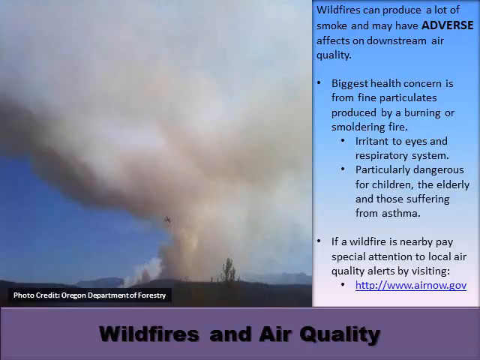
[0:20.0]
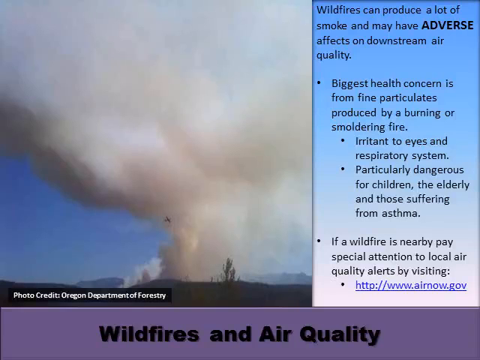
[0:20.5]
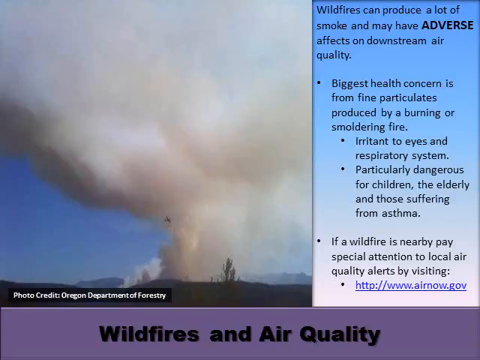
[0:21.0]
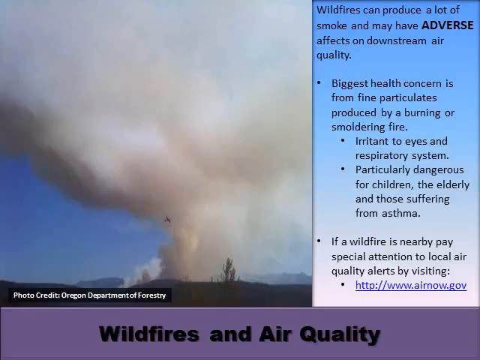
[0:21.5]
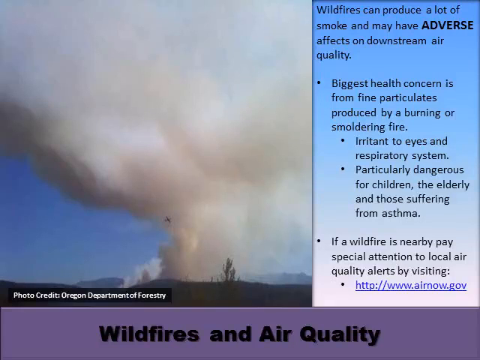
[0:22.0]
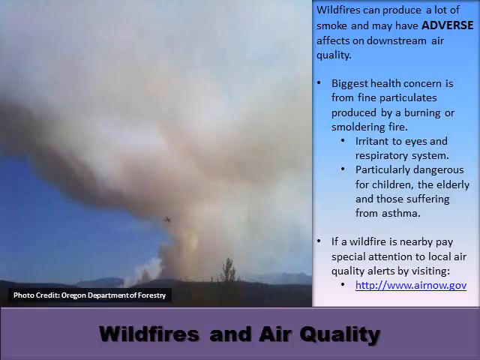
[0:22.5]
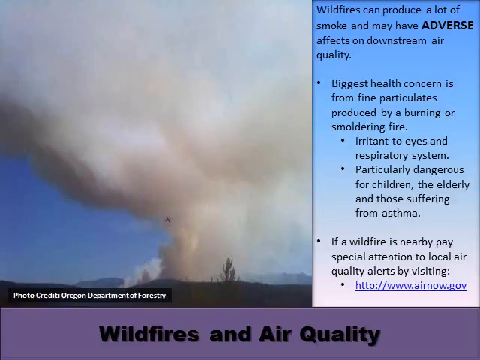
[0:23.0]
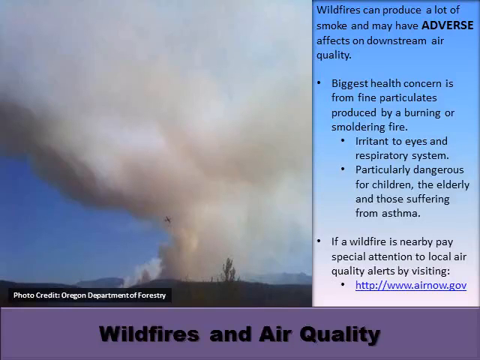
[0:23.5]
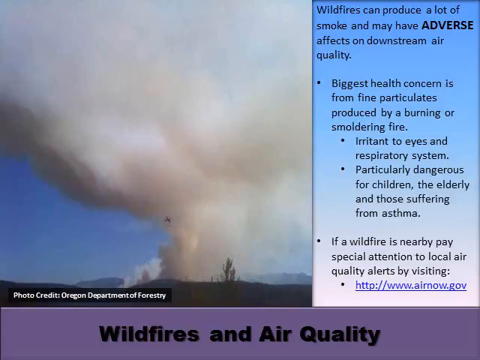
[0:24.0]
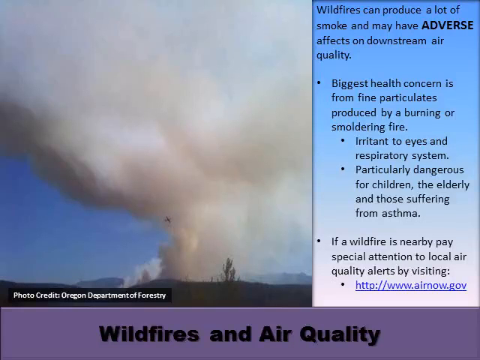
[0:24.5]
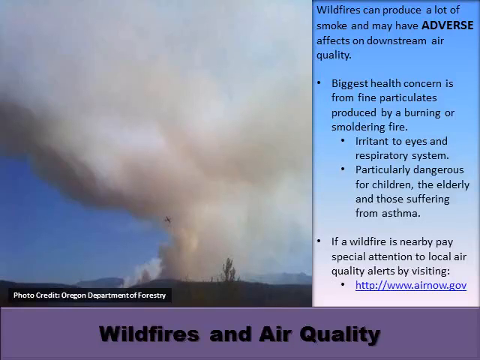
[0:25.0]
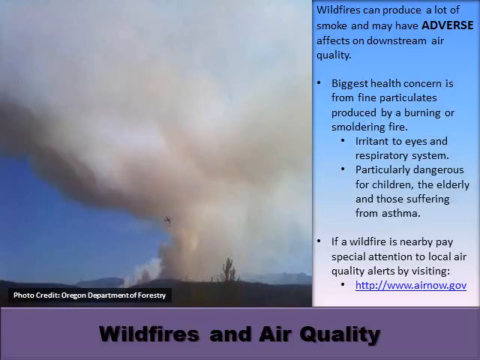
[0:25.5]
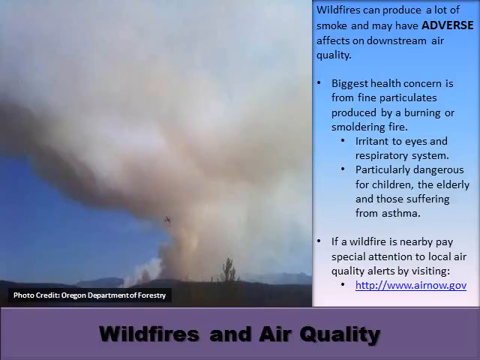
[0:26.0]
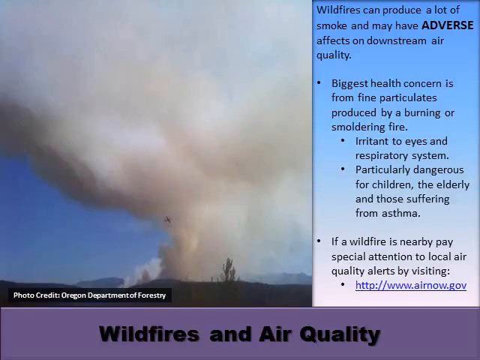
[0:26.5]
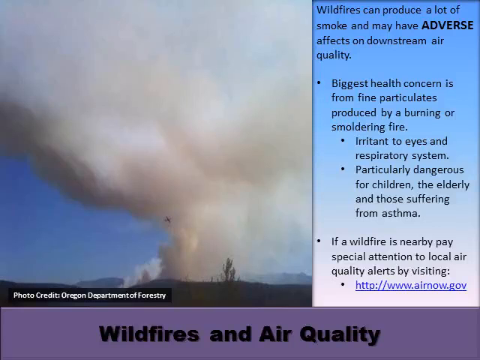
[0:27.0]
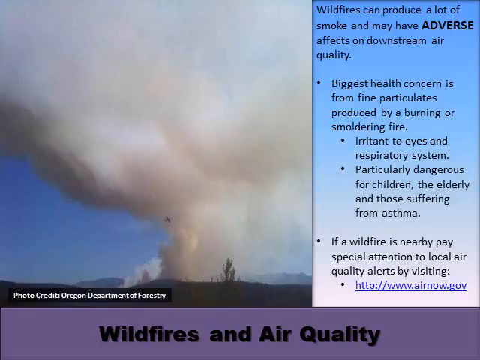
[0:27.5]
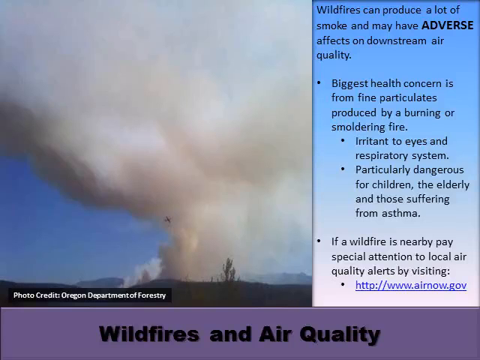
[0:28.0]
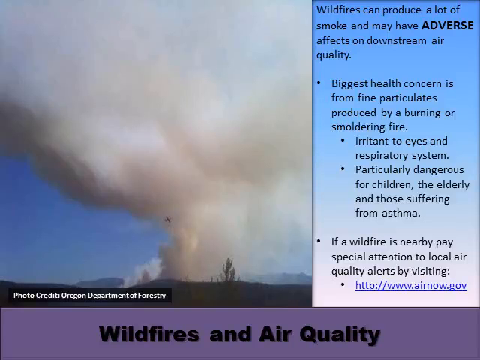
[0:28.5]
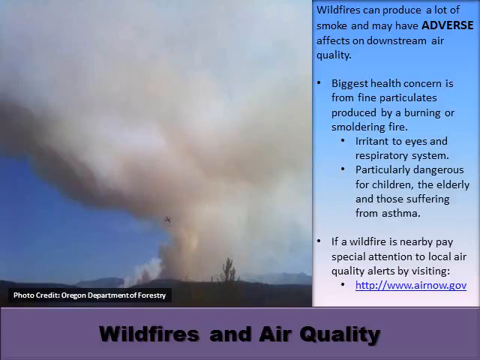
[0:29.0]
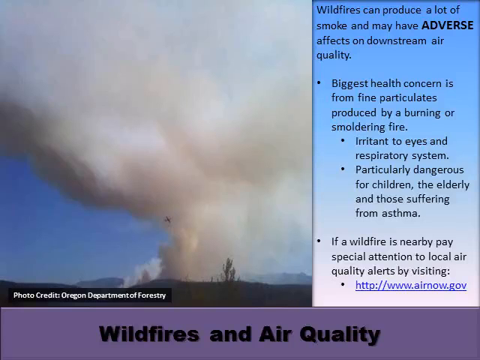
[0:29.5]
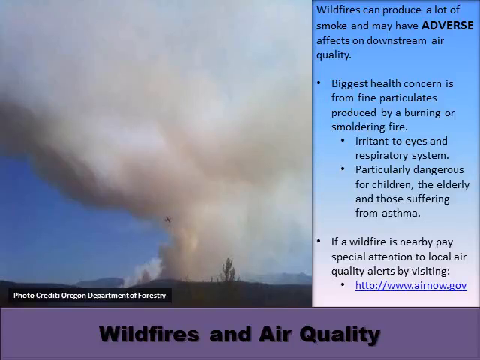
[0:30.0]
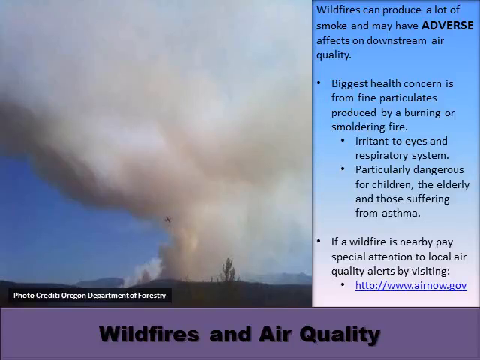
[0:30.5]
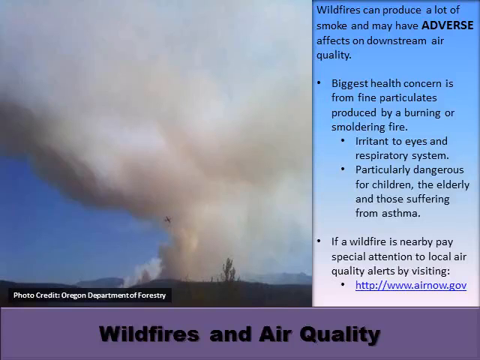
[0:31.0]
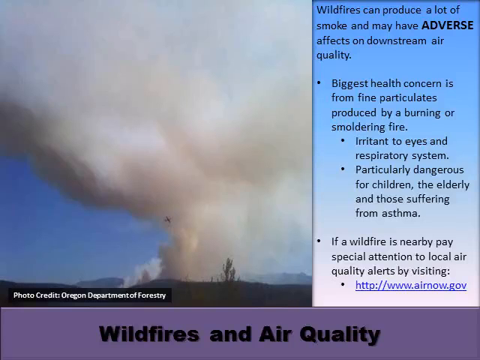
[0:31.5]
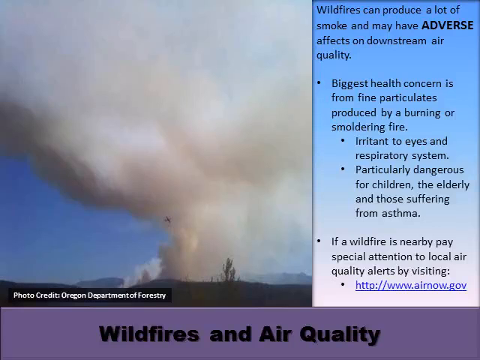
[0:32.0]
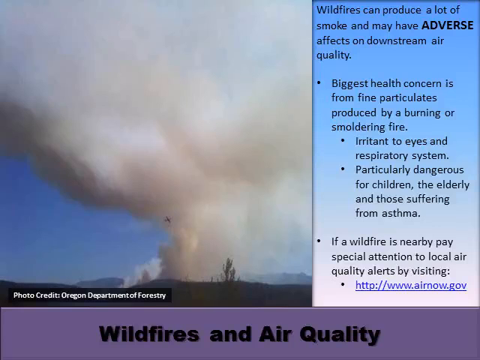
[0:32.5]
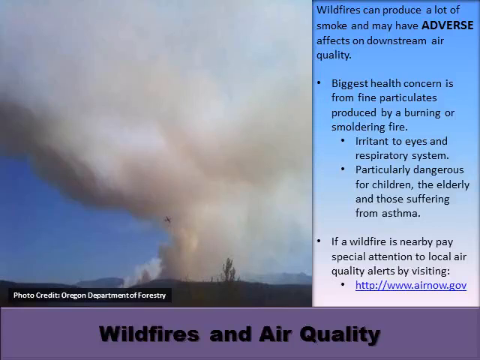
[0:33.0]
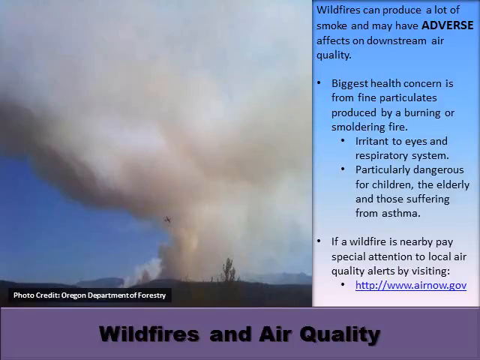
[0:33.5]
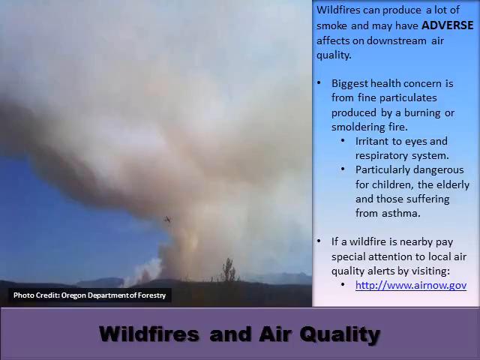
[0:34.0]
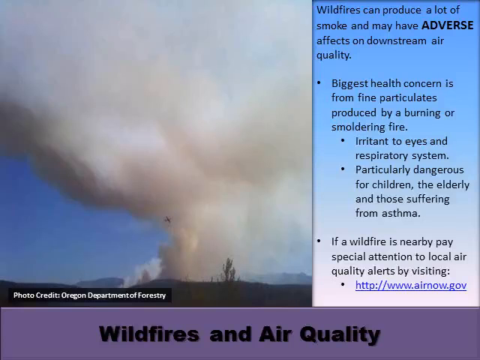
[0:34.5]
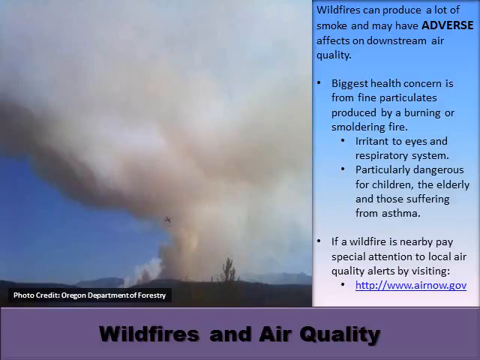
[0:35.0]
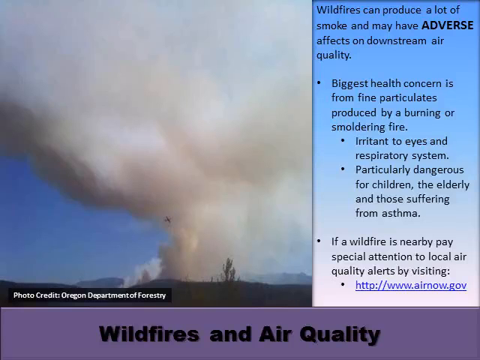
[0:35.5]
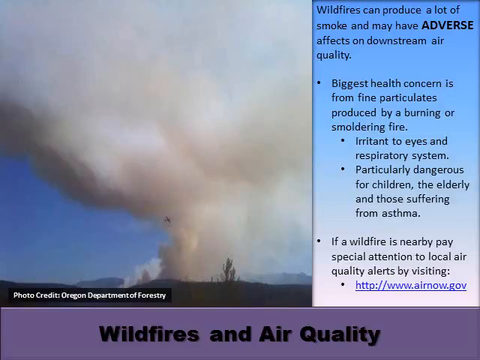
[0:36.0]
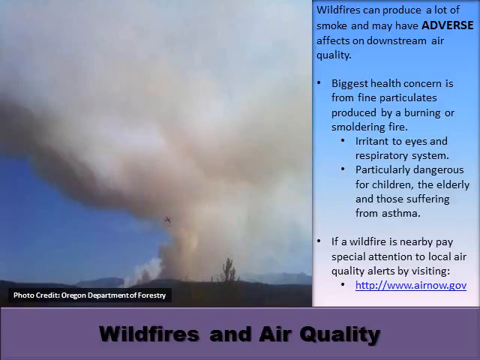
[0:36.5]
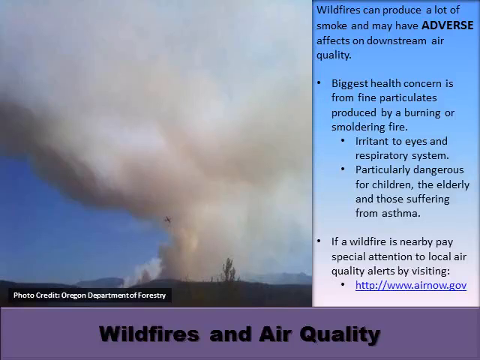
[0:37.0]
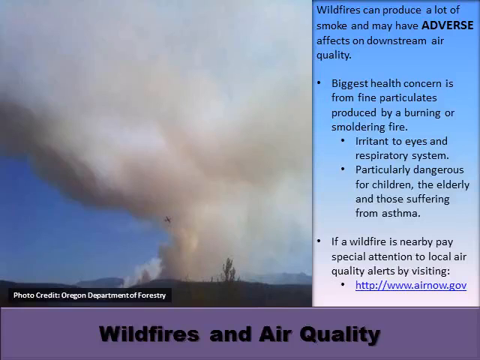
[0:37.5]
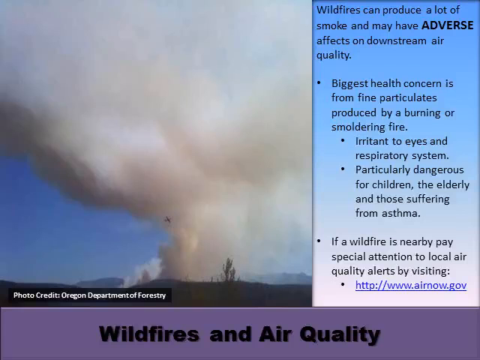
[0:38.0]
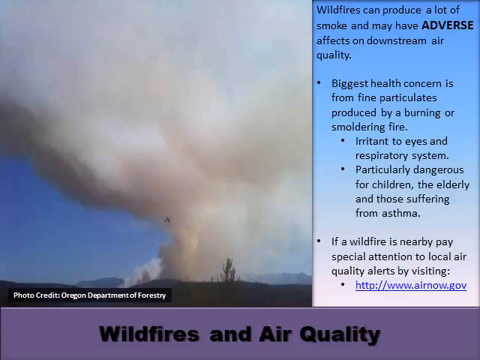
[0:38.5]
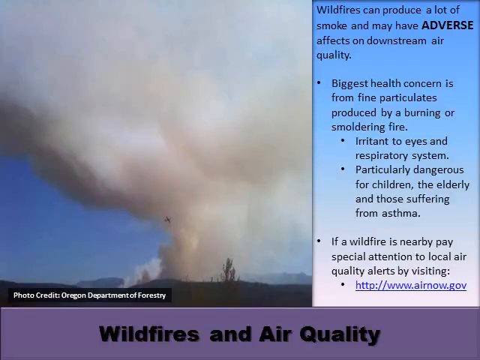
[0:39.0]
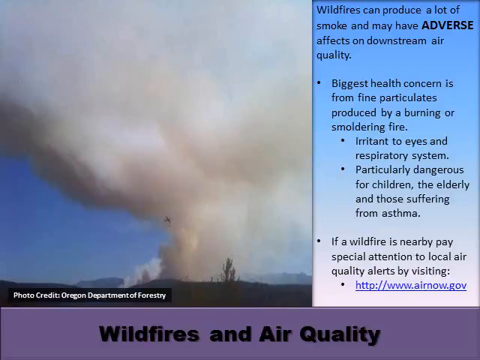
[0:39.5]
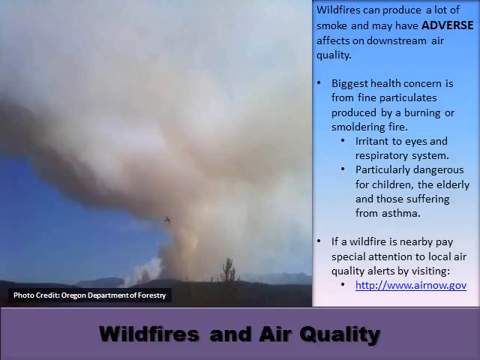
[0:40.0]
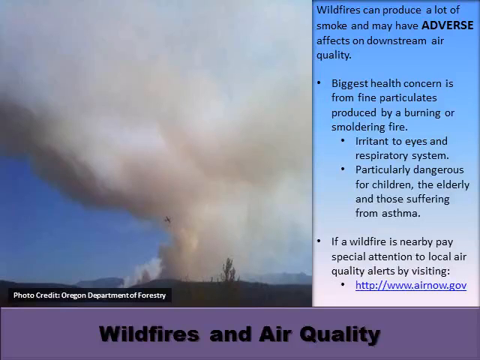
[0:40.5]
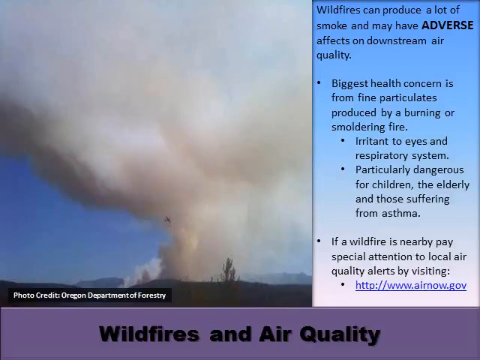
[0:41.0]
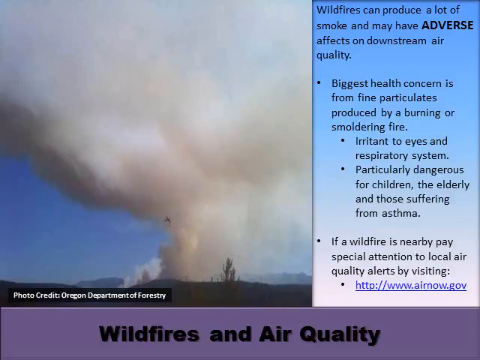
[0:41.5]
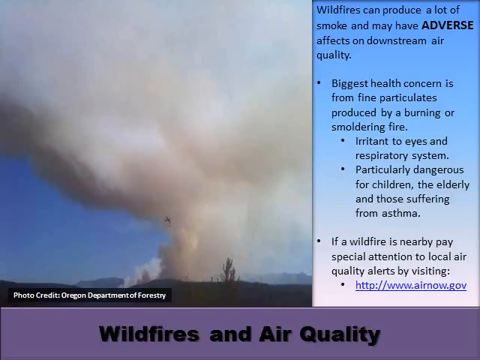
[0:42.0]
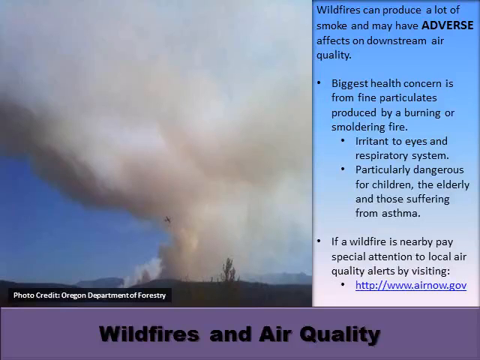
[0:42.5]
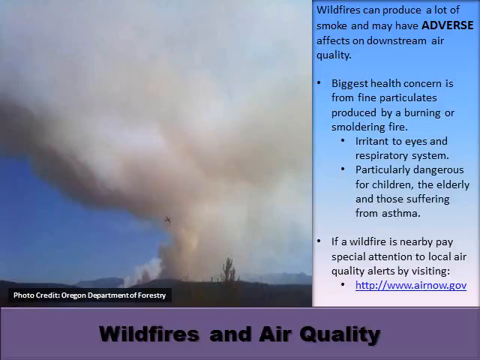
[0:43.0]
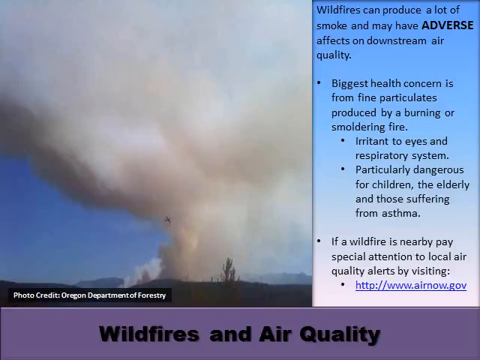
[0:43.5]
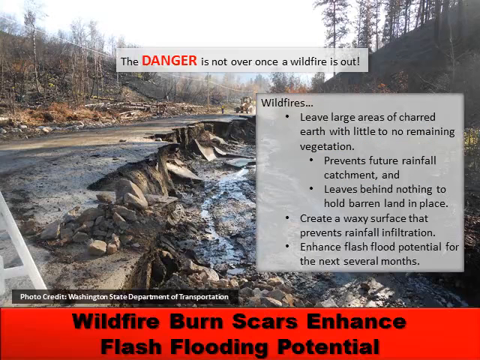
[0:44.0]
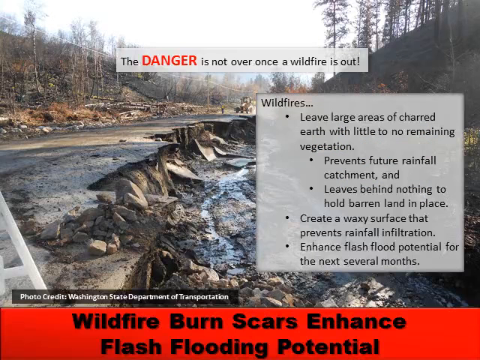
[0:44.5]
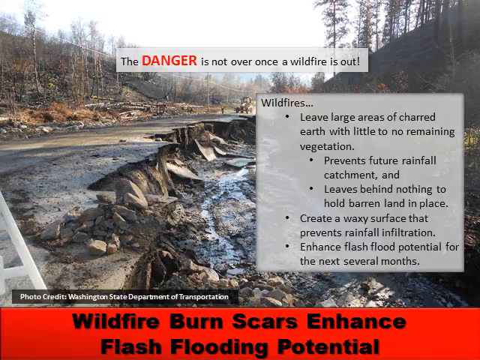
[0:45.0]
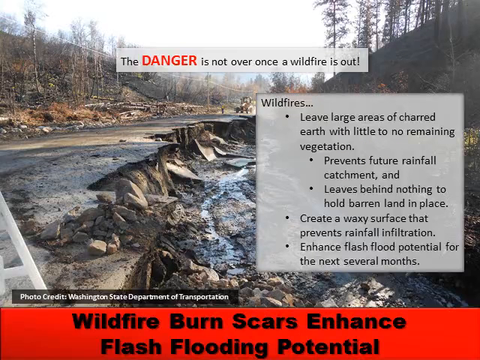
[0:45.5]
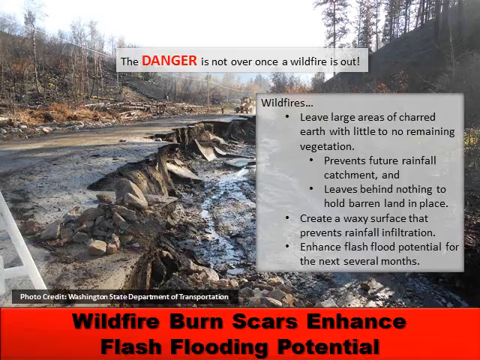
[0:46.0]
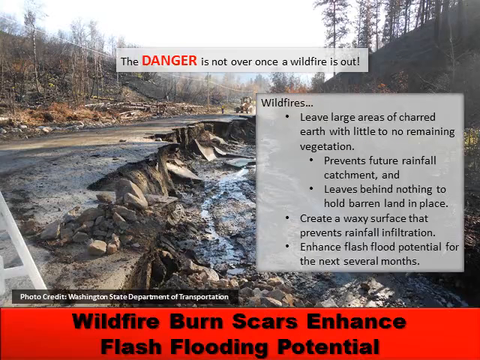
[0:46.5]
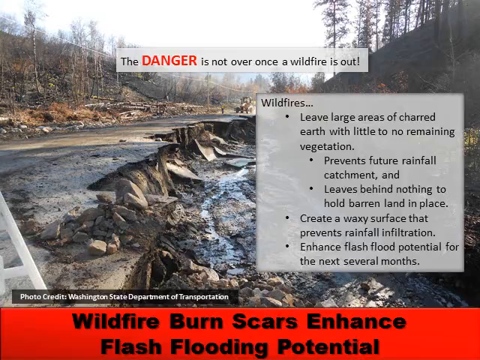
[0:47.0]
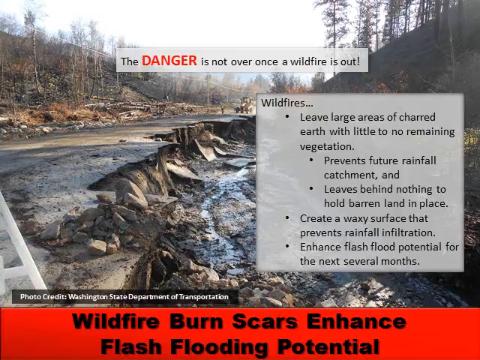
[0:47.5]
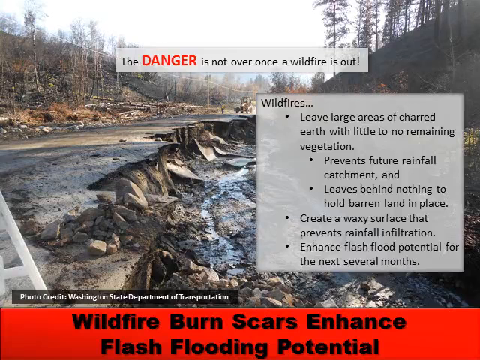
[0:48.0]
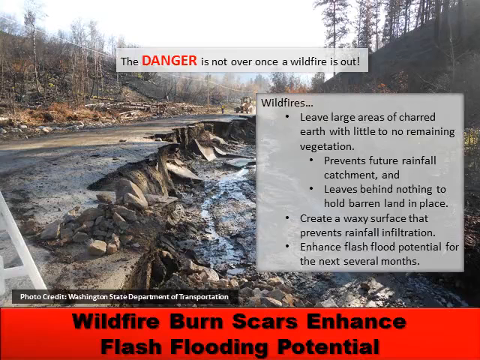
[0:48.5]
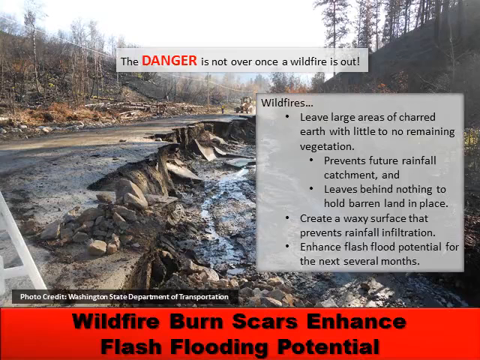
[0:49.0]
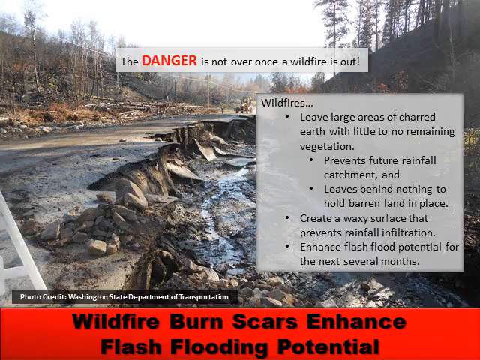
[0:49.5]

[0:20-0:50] The wildfires and air quality slide is still on screen. Its title is at the bottom rather than the top, in black text on what is apparently a purple background. The slide then changes to one with the title "Wildfire burn scars enhance" in the same format: the title is at the bottom in black text, but the background is red. The picture also changes, showing wilderness with what looks like a creek running along the right side. Two semi-opaque boxes contain text. The first reads "The danger is not over once a wildfire is out," with the word "danger" in red and capitalized. The second box is in bullet format and reads "Wildfires leave large areas of charred earth with little to no remaining vegetation, prevents future rainfall catchment, and leaves behind nothing to hold the barren land in place. It also creates a waxy surface that prevents rainfall infiltration," and also mentions "flash flood potential for the next several months." A photo credit tag from the Washington State Department of Transportation is on the slide.